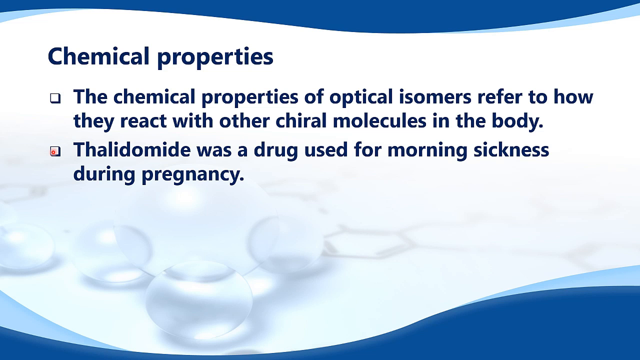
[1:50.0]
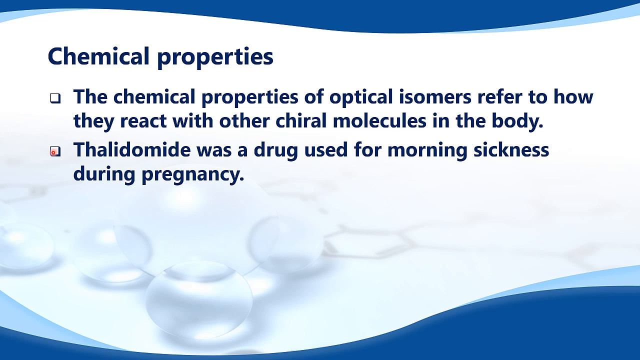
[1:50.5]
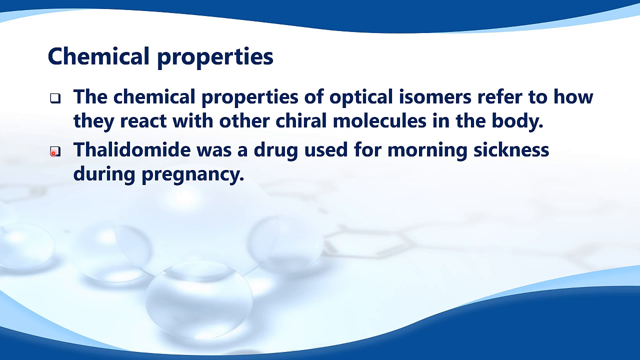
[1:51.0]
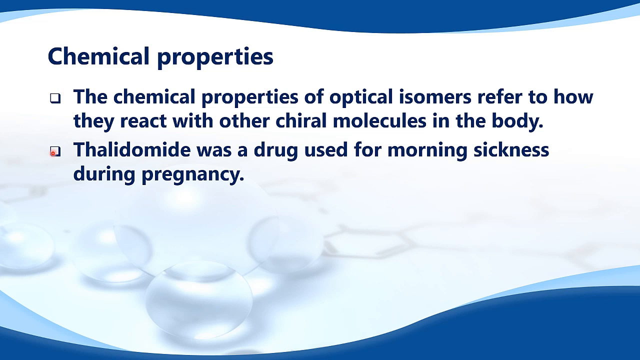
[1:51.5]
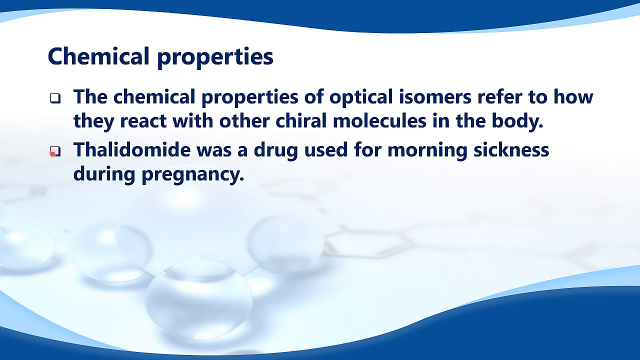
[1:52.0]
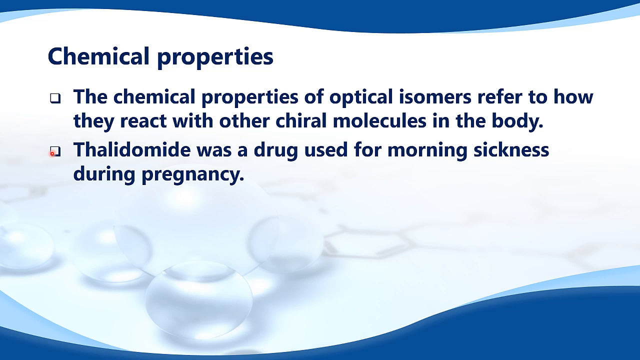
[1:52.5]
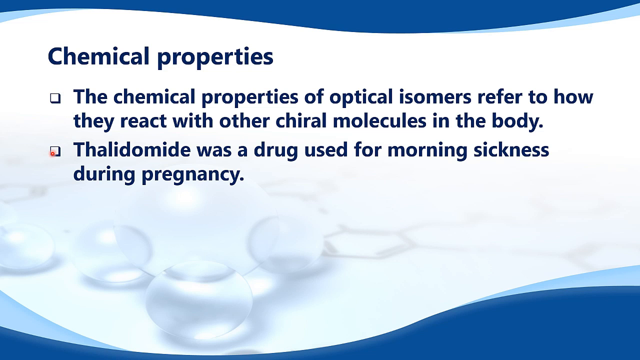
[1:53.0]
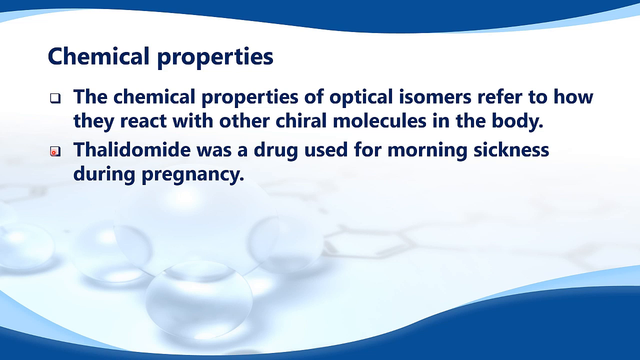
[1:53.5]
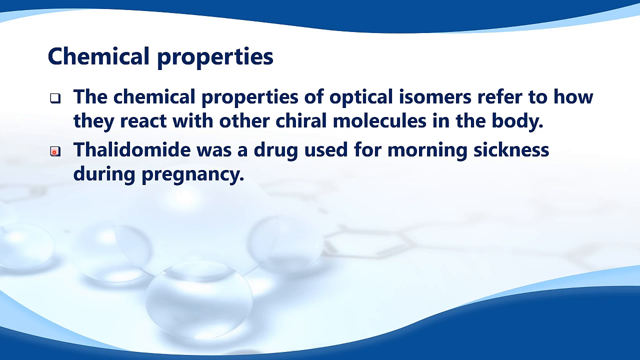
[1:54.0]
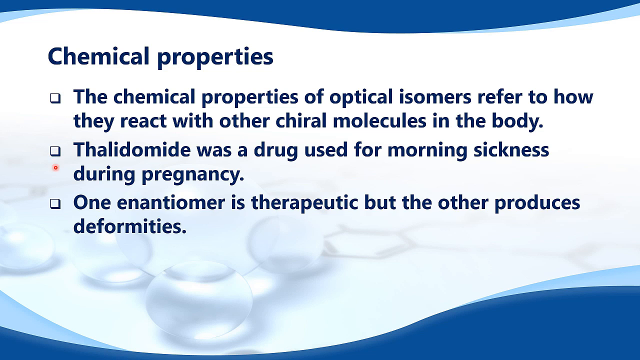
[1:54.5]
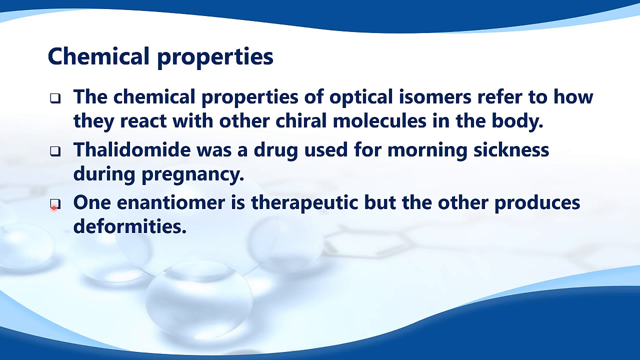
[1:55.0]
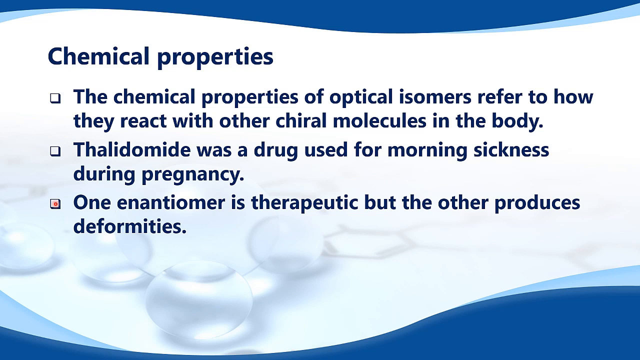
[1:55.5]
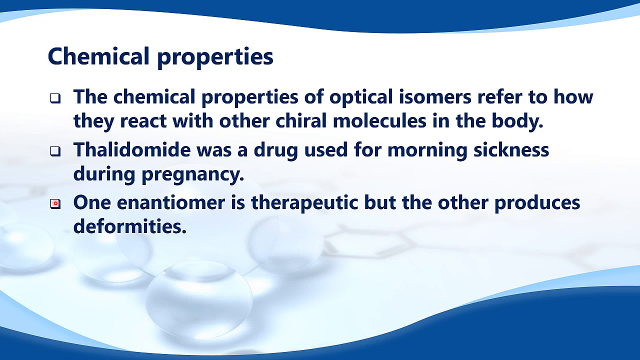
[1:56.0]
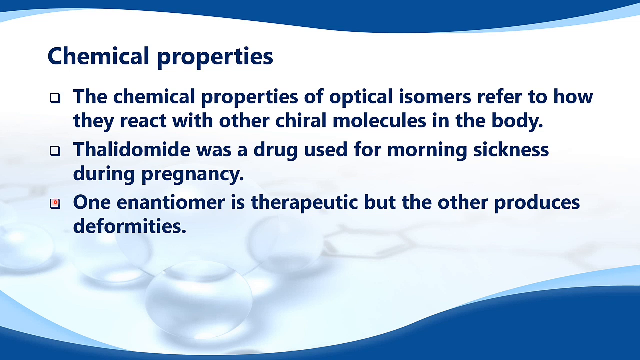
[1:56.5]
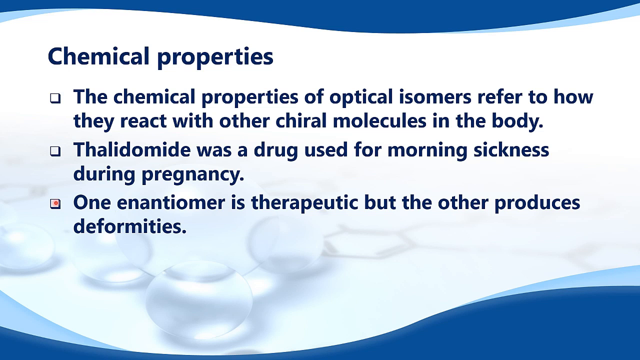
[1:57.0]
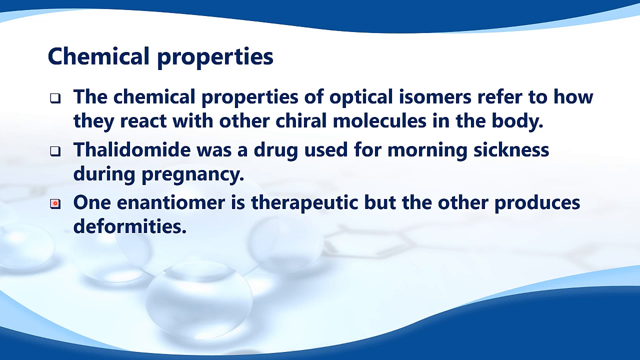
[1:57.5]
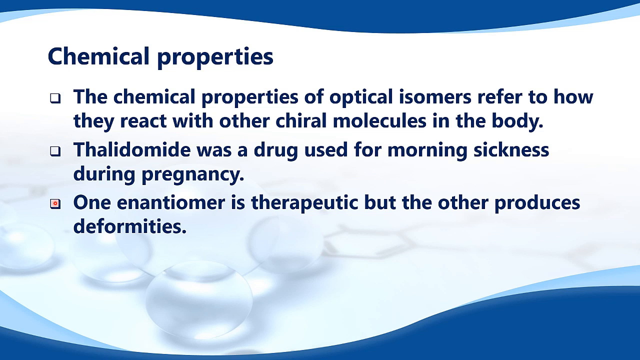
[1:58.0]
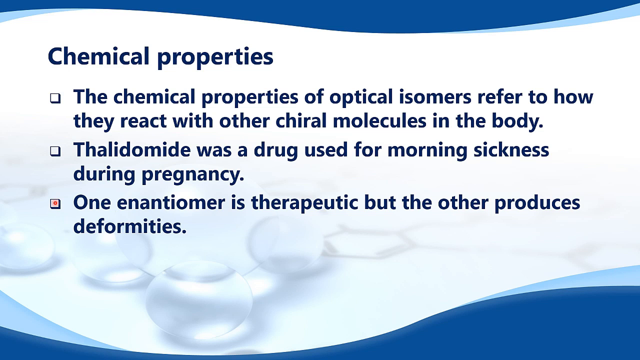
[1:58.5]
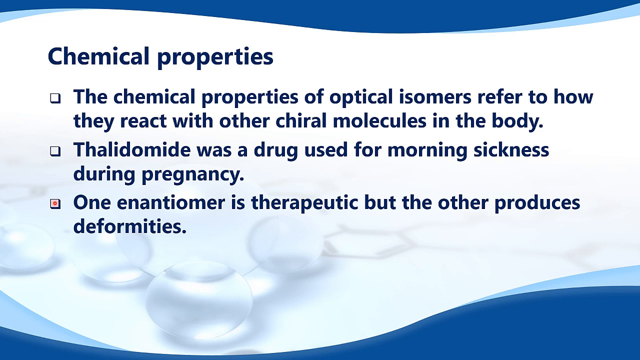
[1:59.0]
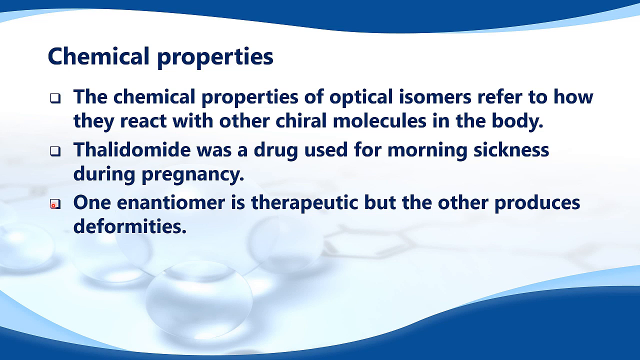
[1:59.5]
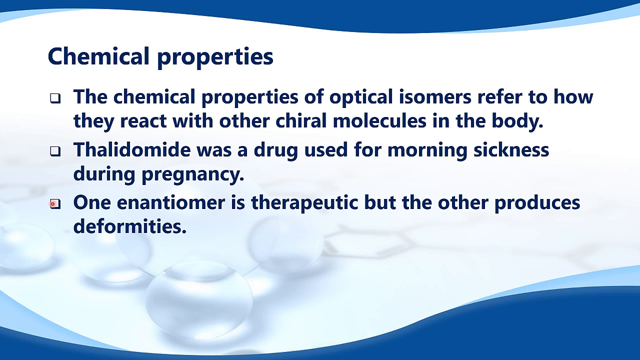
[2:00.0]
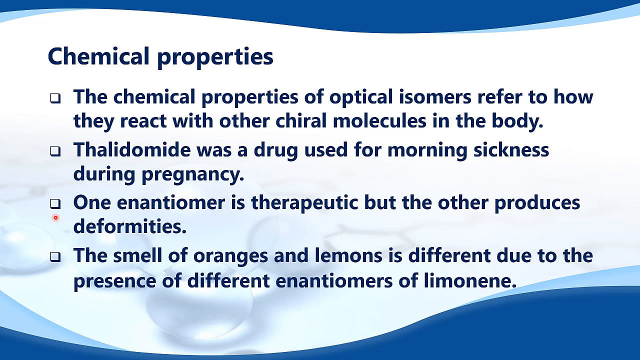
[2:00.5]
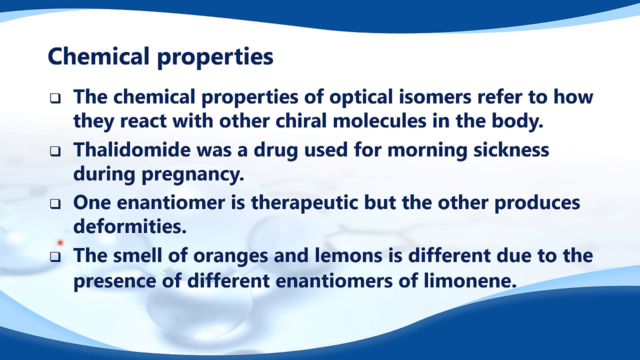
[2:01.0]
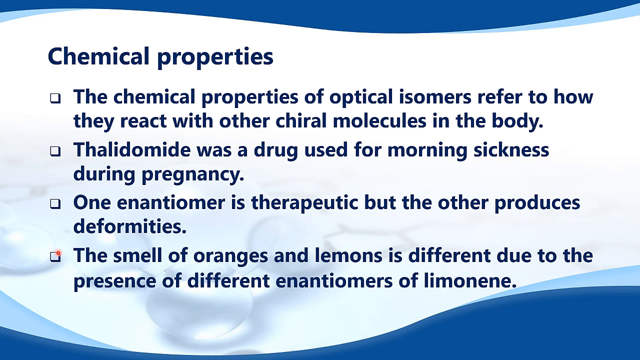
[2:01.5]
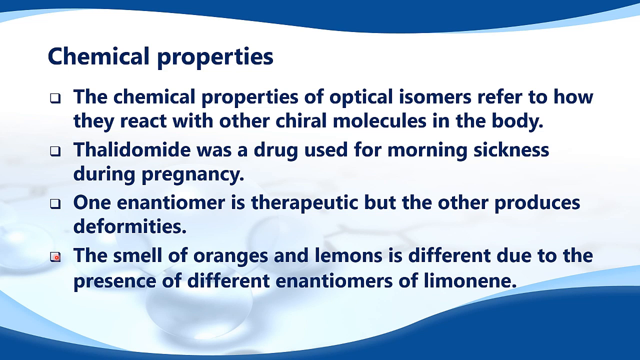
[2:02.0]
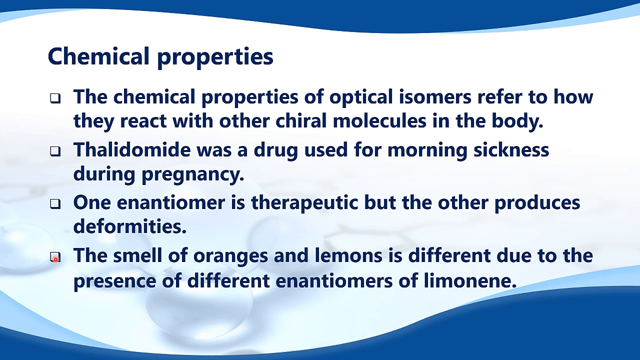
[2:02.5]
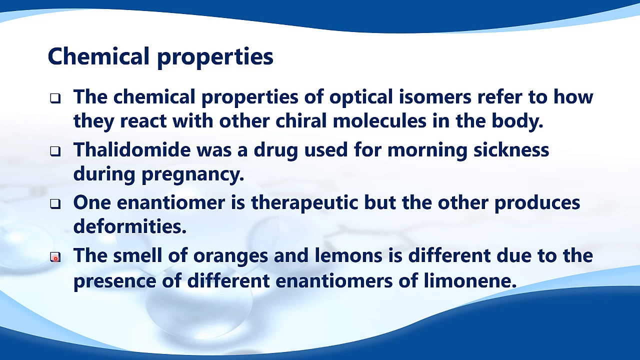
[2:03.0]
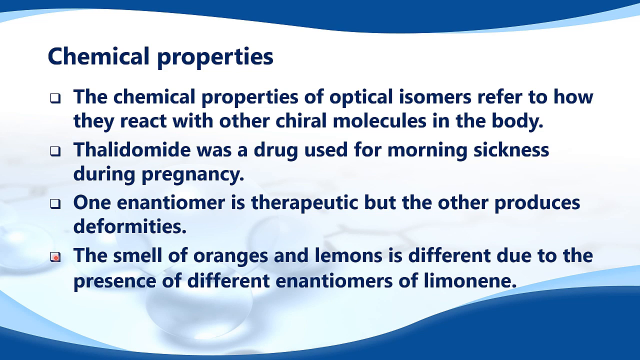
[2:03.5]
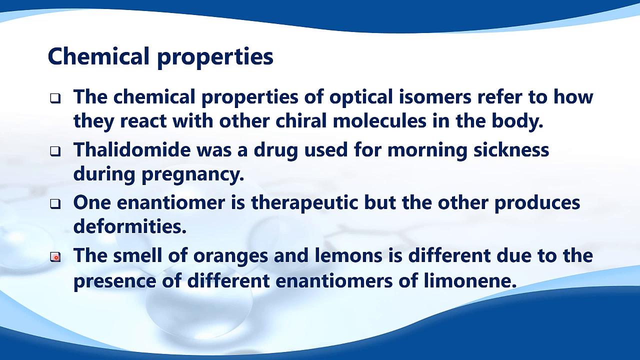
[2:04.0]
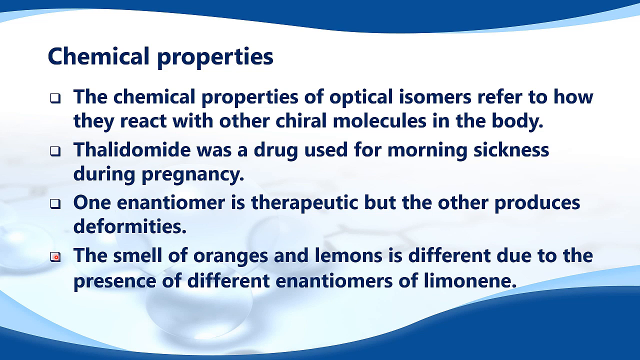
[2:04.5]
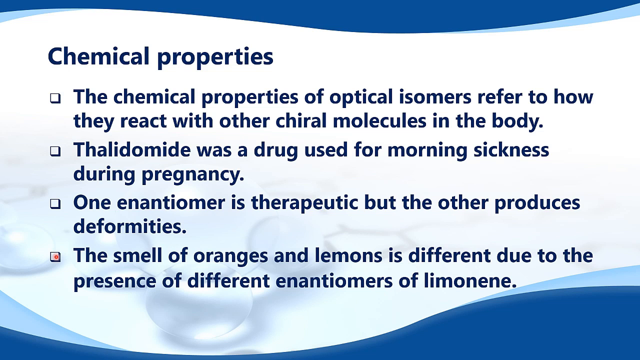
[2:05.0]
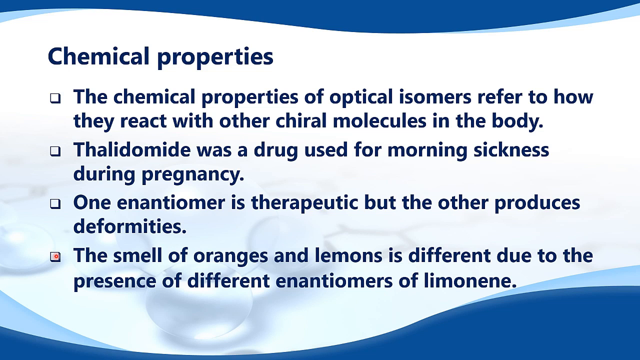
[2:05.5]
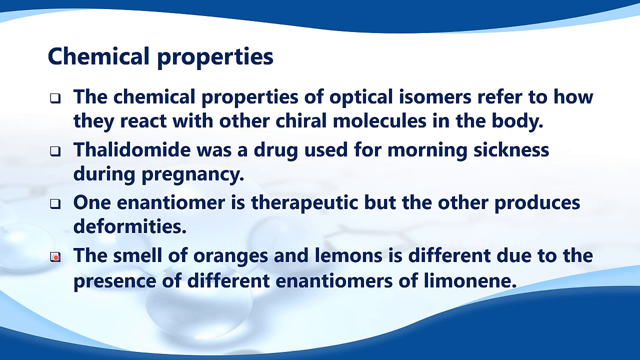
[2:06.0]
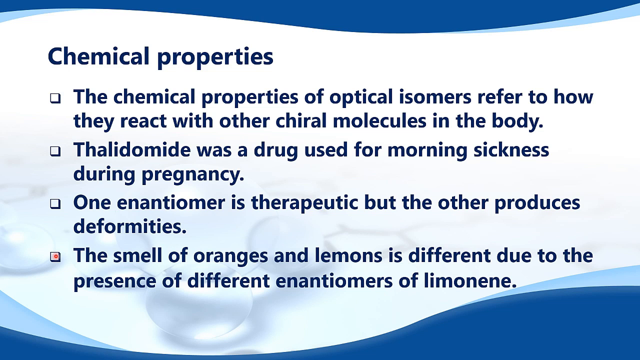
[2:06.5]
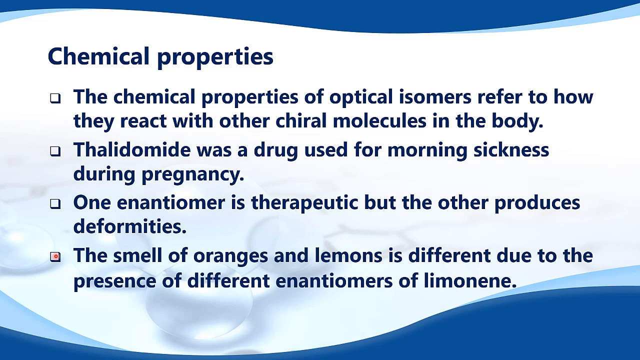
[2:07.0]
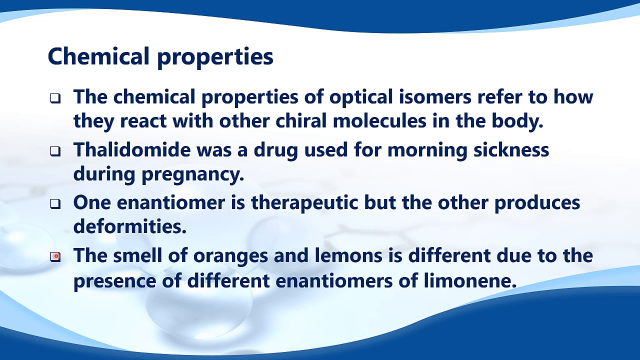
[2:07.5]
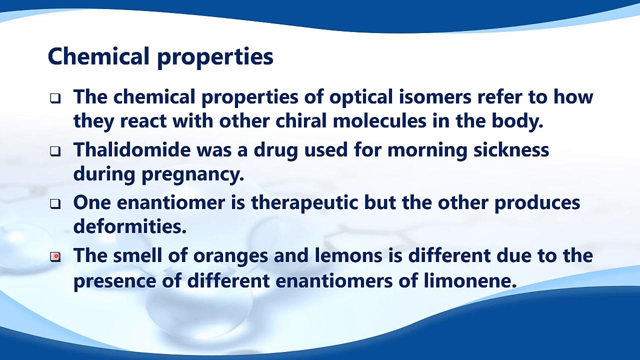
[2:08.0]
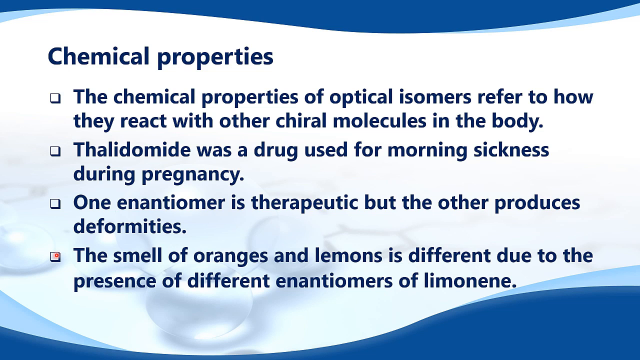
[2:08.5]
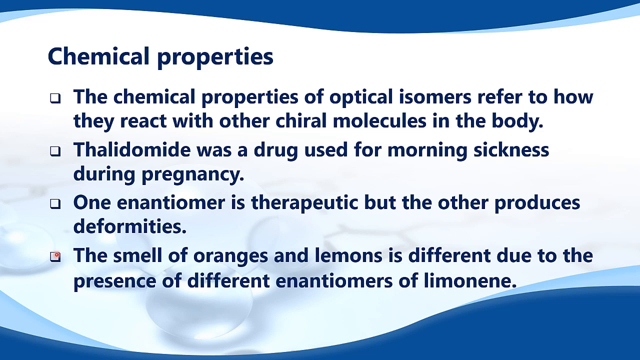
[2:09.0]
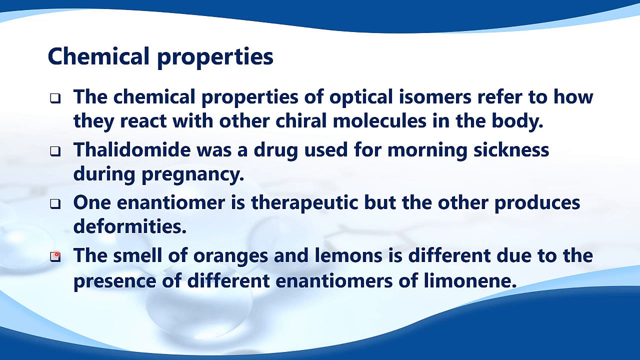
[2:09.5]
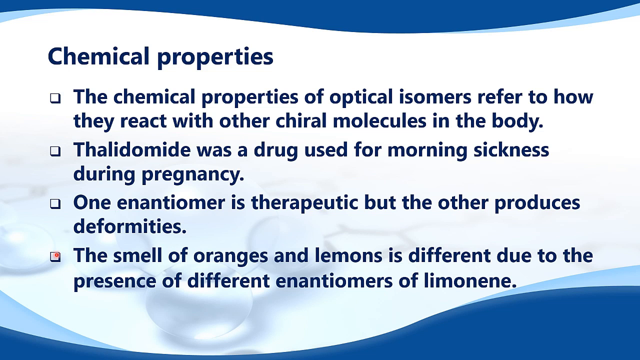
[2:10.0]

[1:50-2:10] A third bullet point appears reading "one enantiomer is therapeutic, but the other produces deformities", followed by a fourth reading "the smell of oranges and lemons is different due to the presence of different enantiomers of limonene". This appears to be the end of the bullet points and of the graphic. The blue wave at the top is thin on the left, gets a little thicker toward the right, dips down a little, then dips back up to the end at the upper right, with a little shading at the very ends of the right and left sides on the lower part of the blue. The bottom wave starts a little up from the bottom in dark blue, gets very thin until close to the middle, then becomes quite a bit bigger and thicker and rises higher on the right side, higher than where it started. A light blue shadow is on the upper left and upper right, just at the ends.